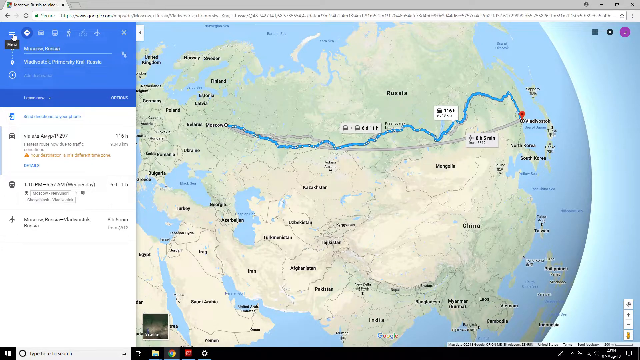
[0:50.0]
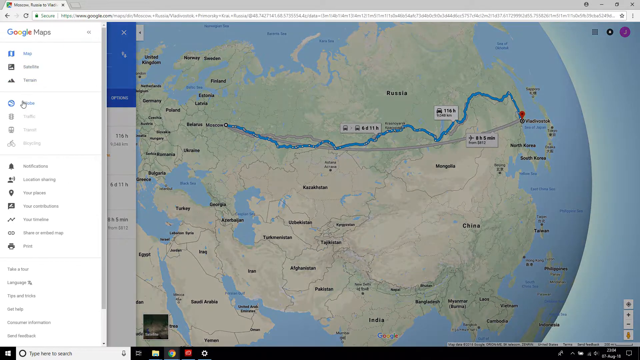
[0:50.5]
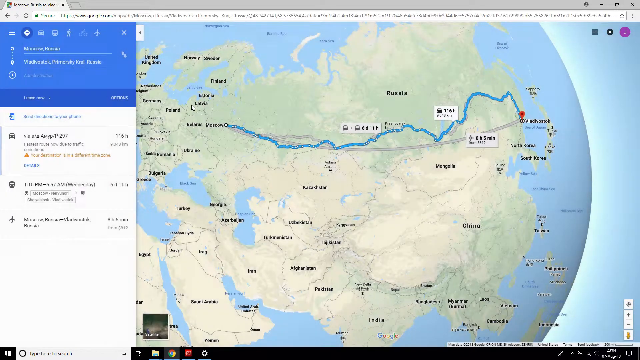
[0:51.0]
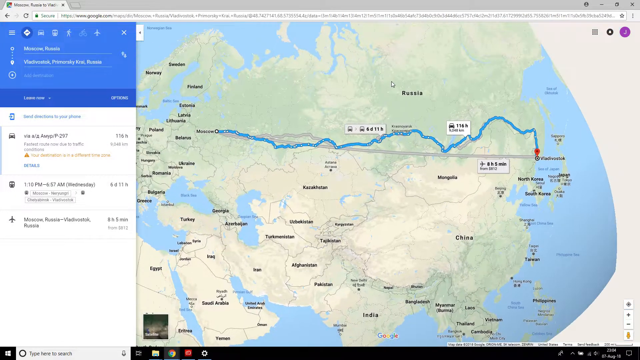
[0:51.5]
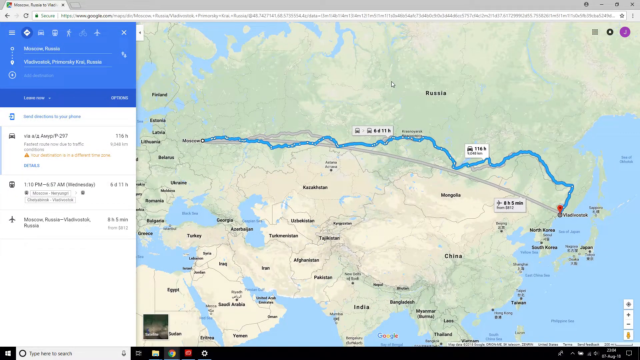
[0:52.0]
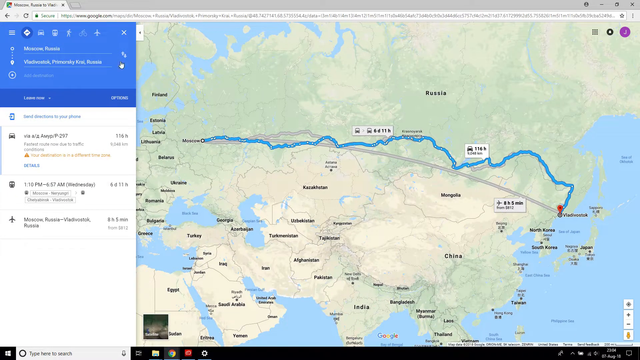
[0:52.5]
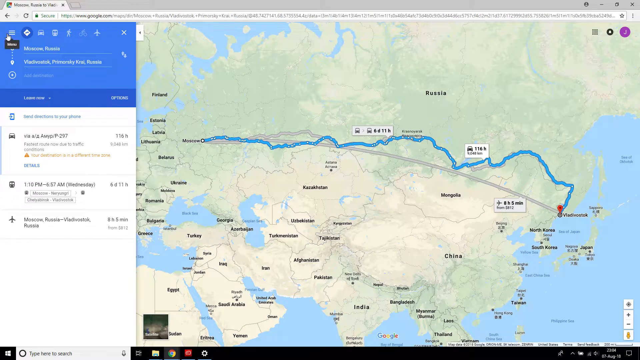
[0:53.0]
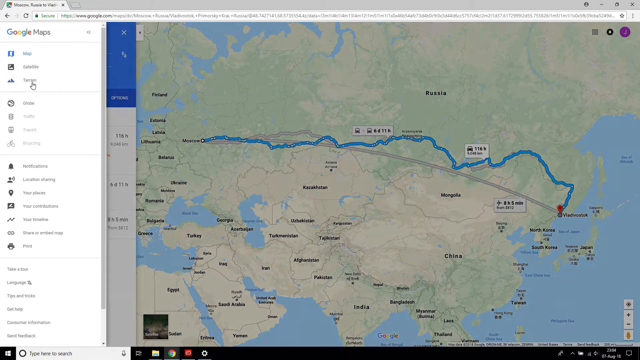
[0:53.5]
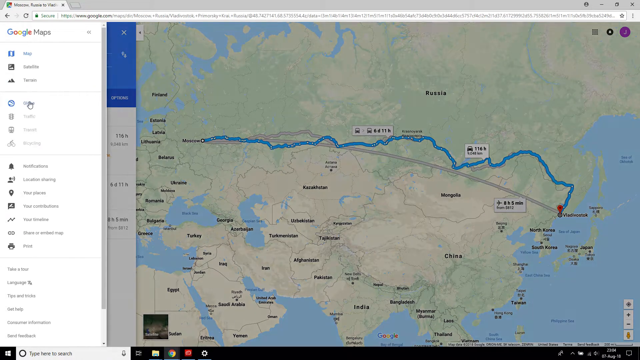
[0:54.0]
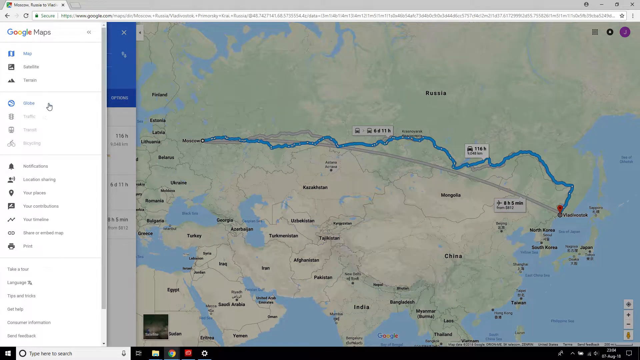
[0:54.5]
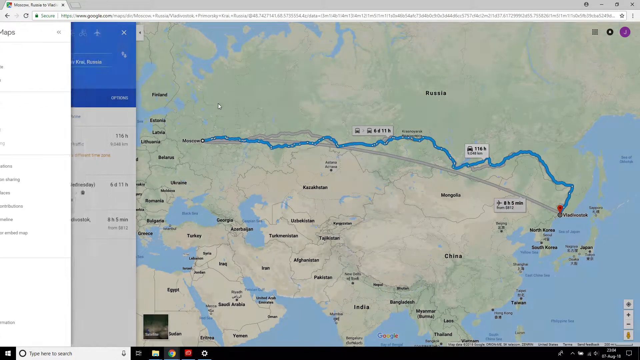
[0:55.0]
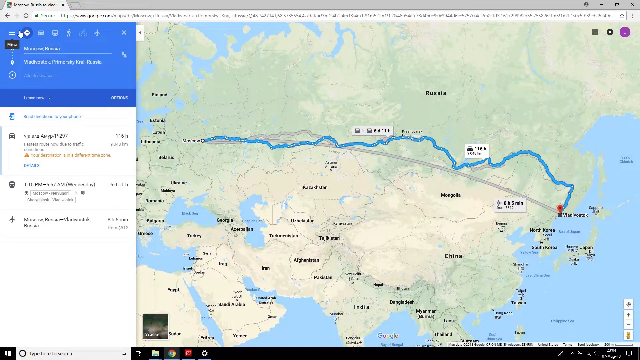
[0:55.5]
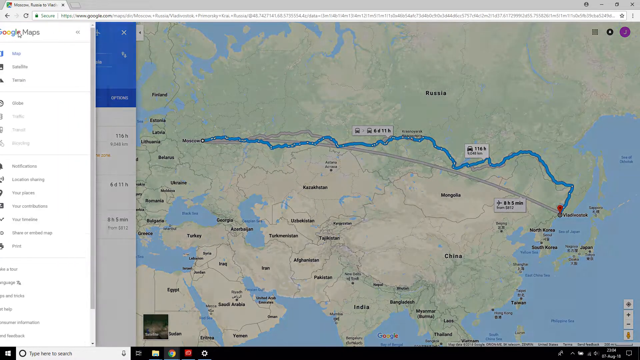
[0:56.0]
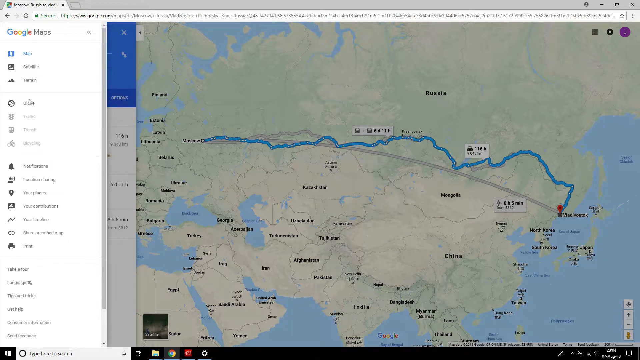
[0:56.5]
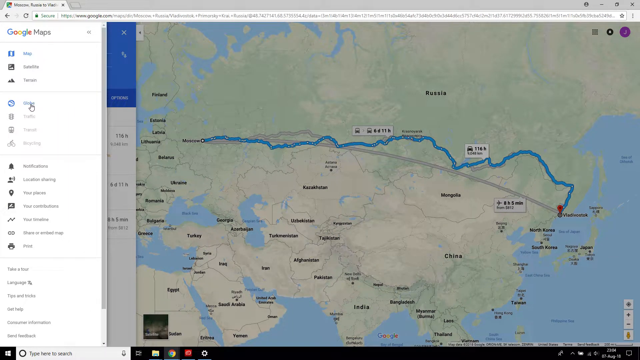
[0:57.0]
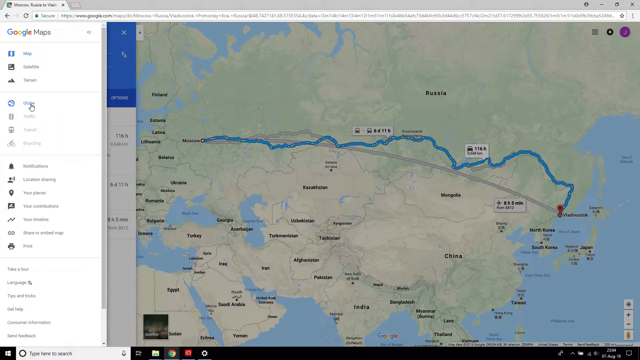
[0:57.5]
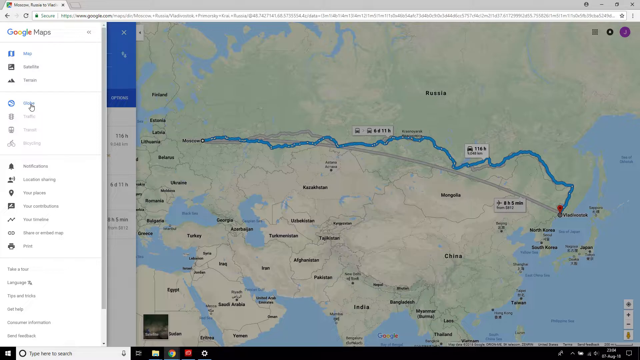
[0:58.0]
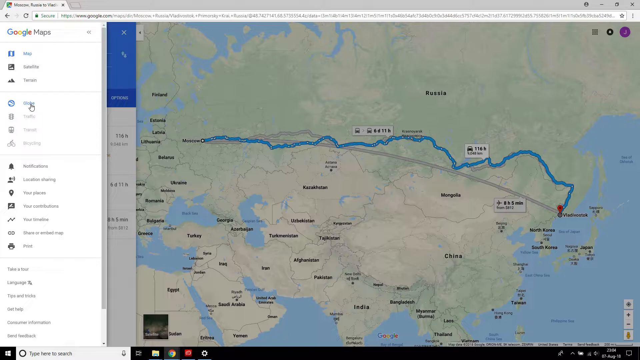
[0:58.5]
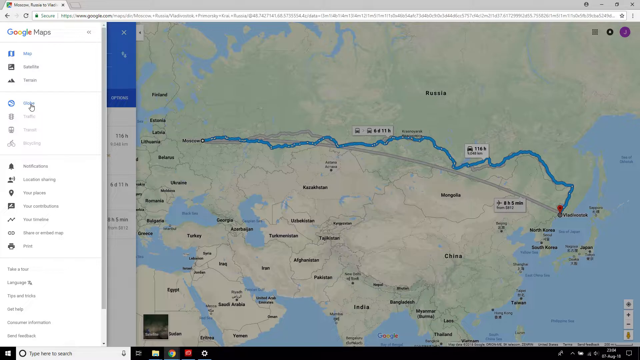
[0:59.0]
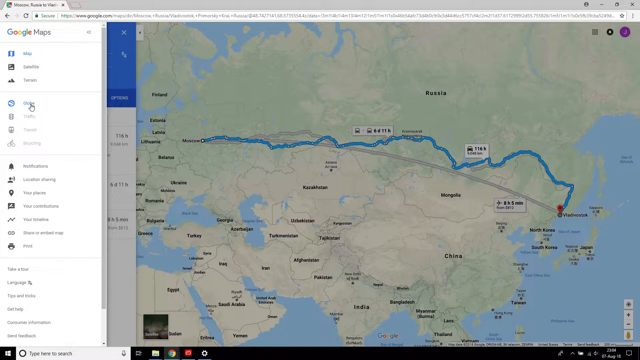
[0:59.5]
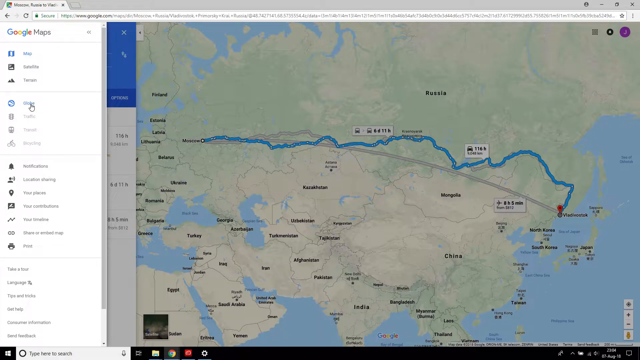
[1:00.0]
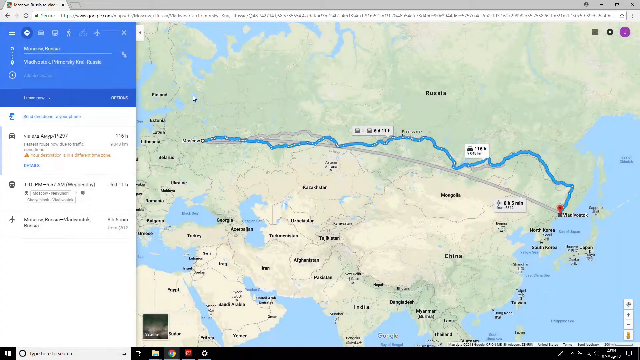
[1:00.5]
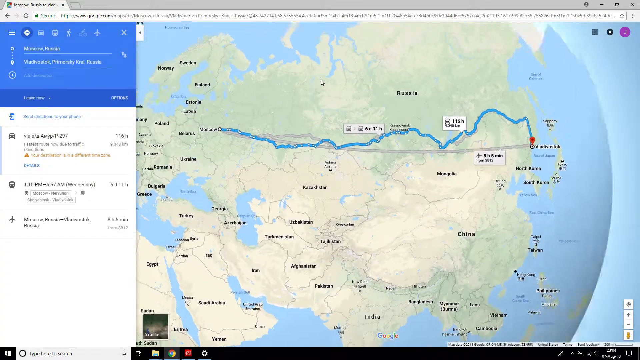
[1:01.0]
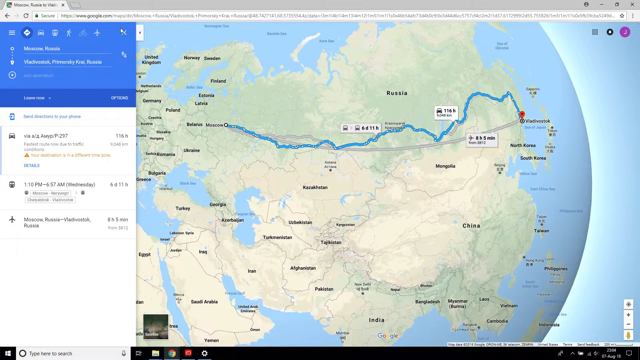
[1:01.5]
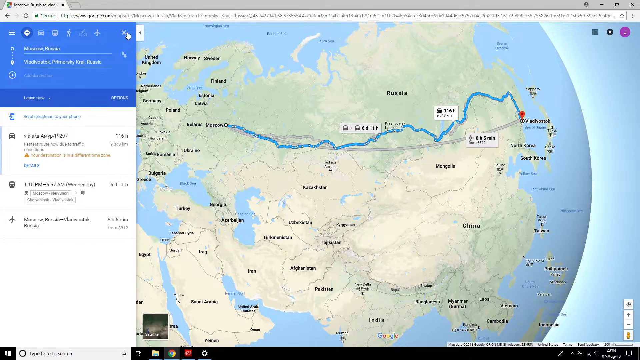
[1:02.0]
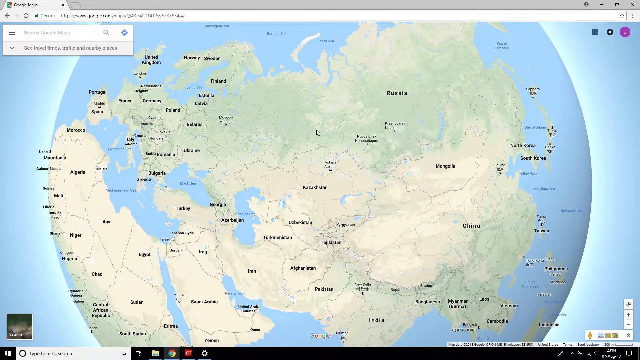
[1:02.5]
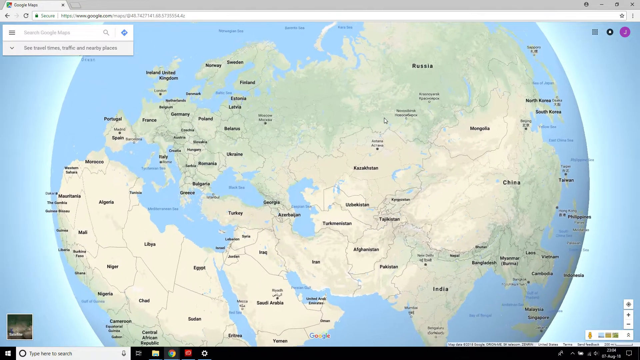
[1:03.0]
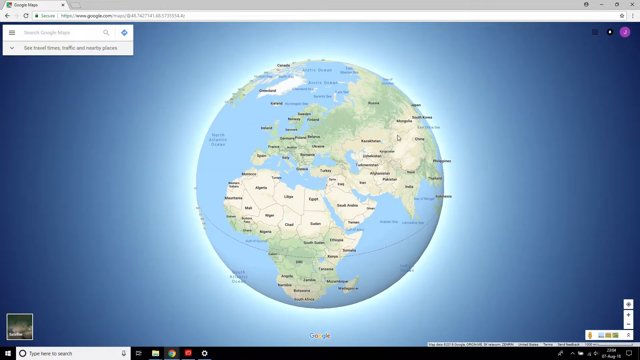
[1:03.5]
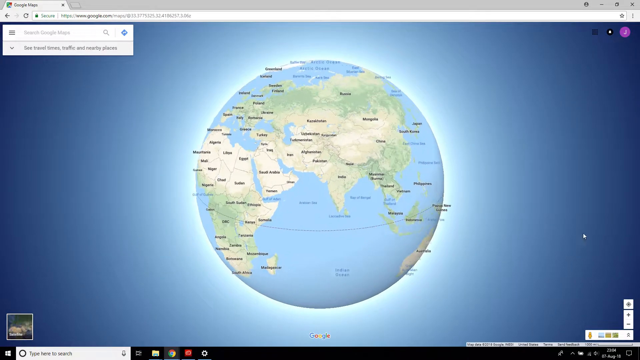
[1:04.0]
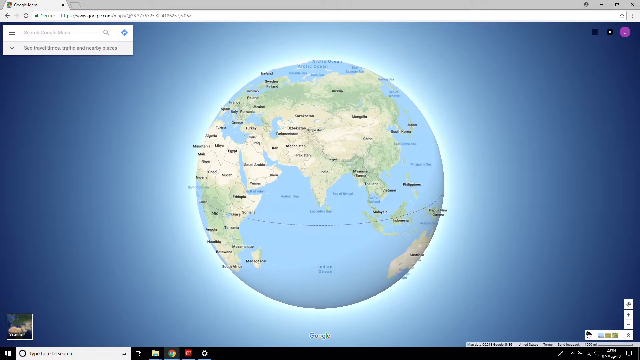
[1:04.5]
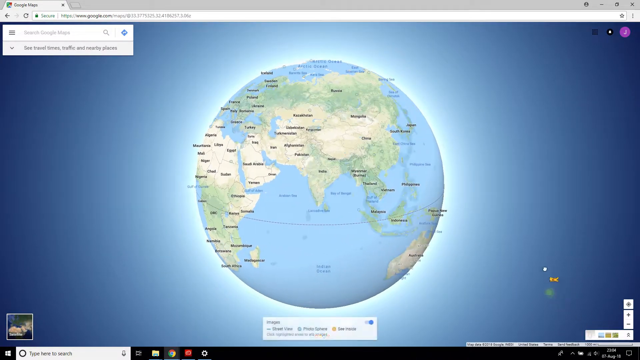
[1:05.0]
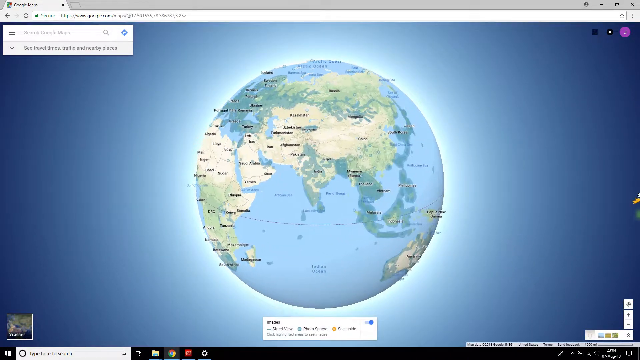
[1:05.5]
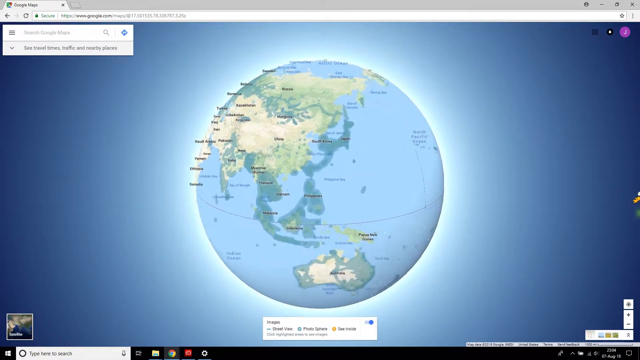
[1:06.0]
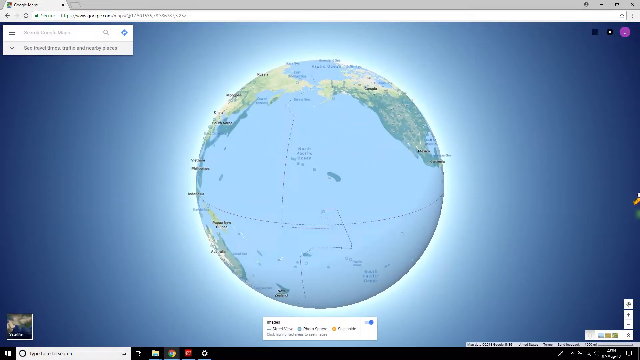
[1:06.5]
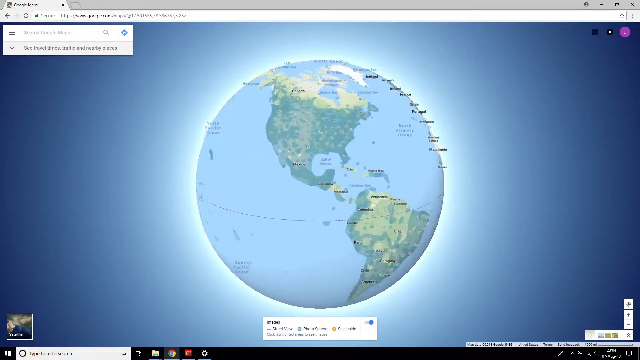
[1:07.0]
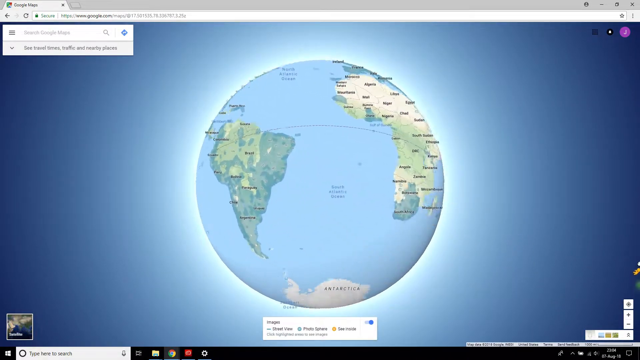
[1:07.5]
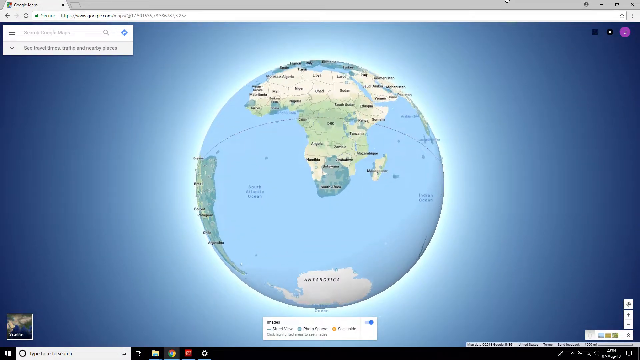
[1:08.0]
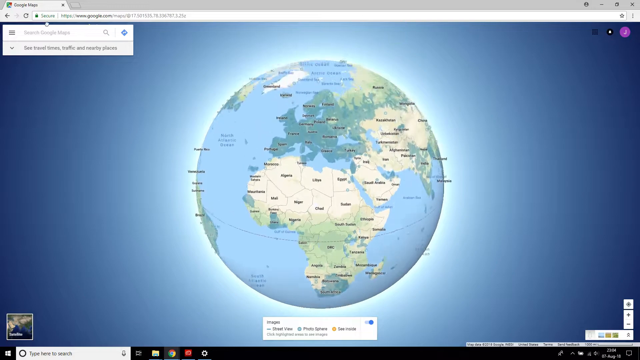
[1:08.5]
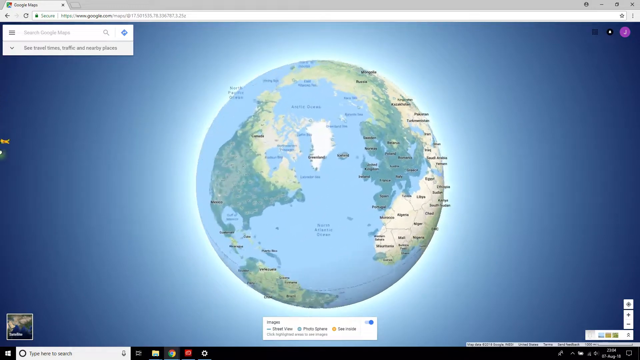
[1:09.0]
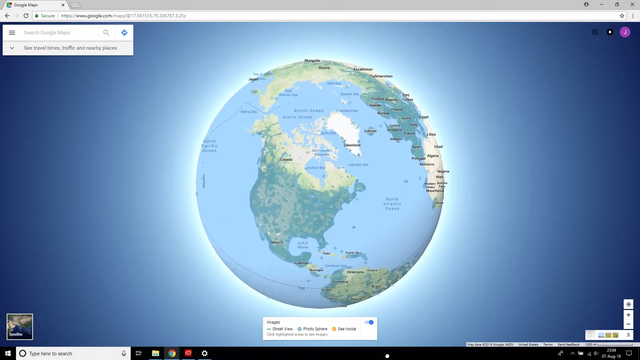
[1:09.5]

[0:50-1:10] The map still shows the drive time between the two cities in Russia, showing how long the drive would take. The person fiddles with different features to enlarge the map and make it smaller. They then zoom out of the map focused on Russia and start spinning around the world, apparently having switched to a globe view of the whole world. They spin around the whole globe, looking around at all the countries.